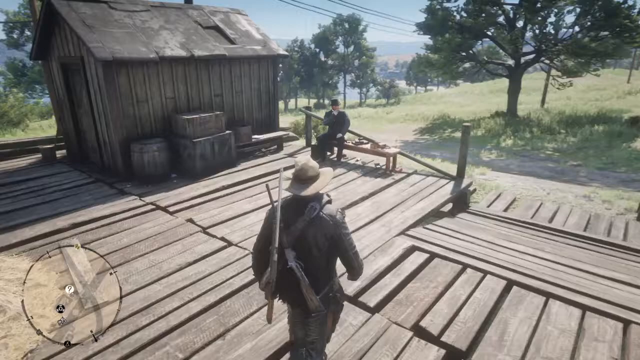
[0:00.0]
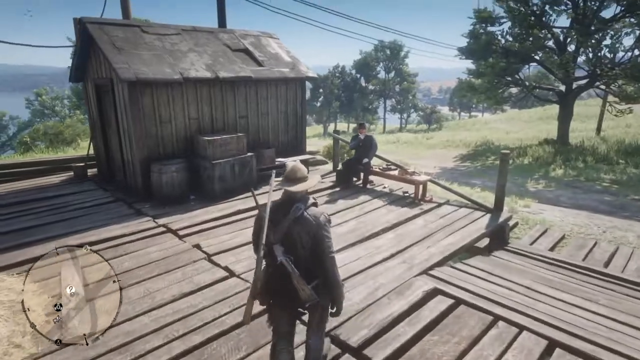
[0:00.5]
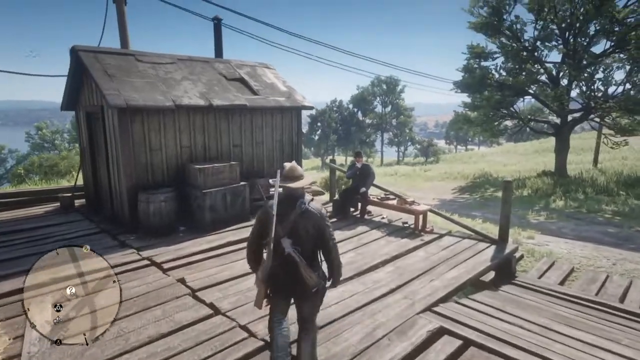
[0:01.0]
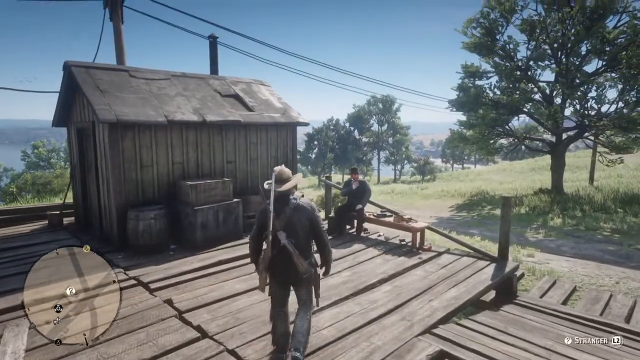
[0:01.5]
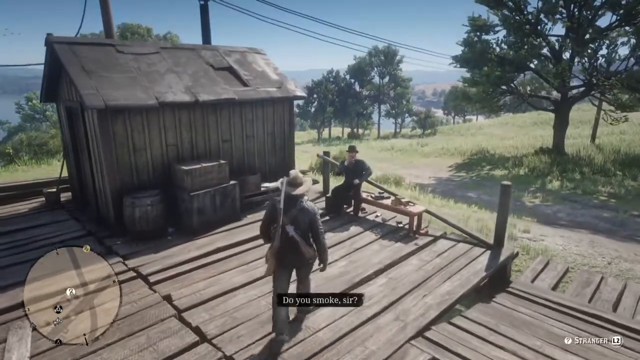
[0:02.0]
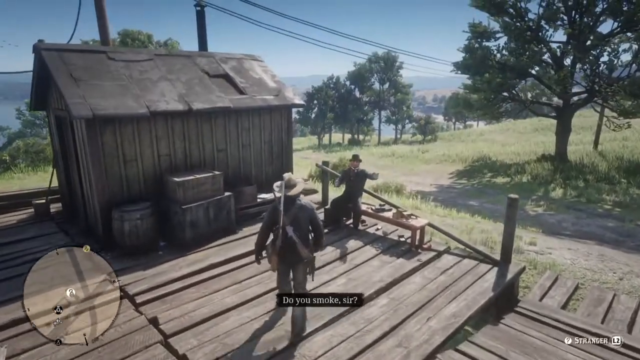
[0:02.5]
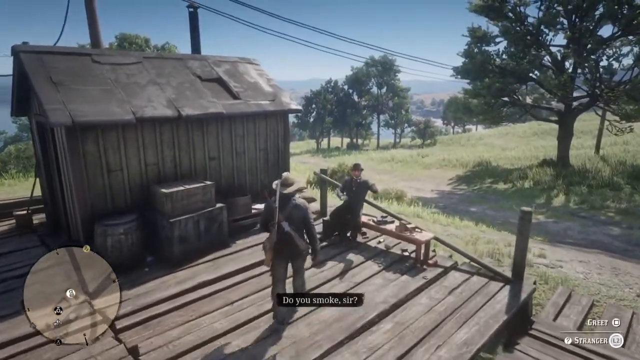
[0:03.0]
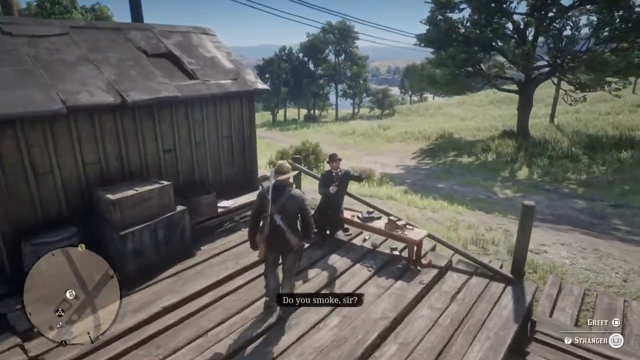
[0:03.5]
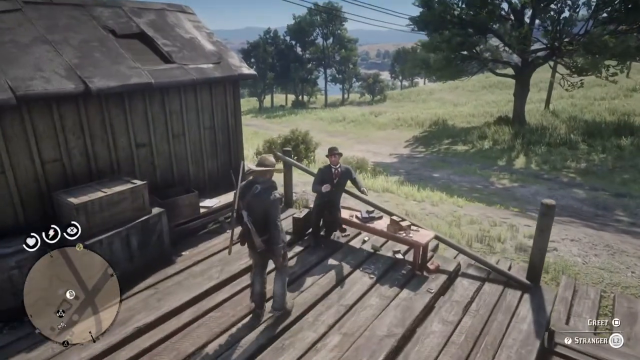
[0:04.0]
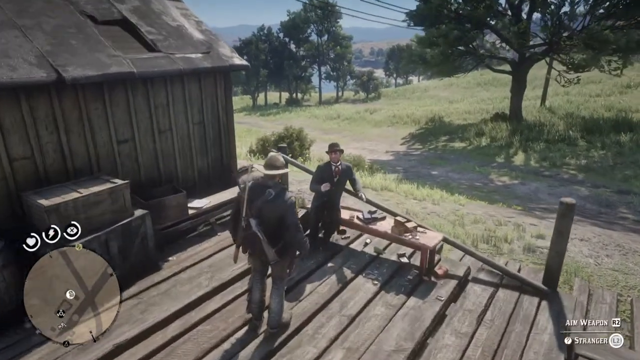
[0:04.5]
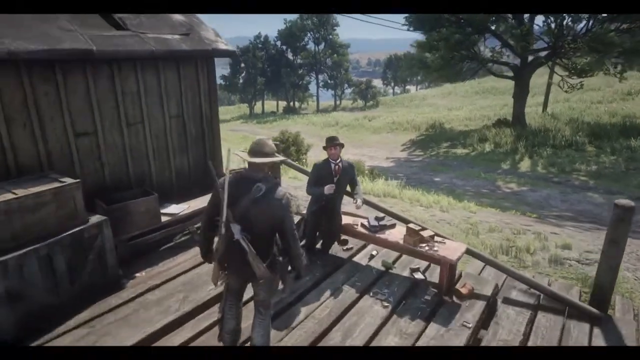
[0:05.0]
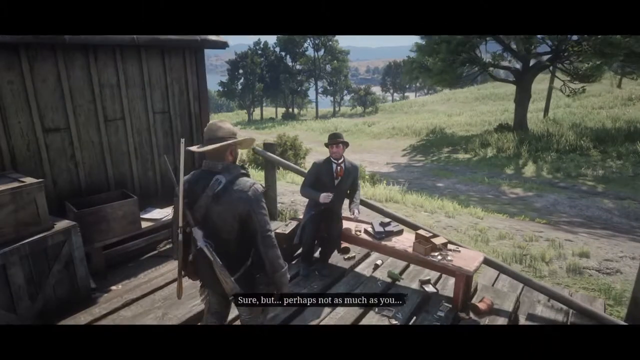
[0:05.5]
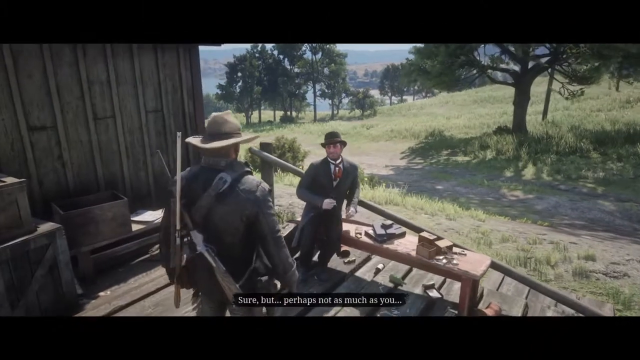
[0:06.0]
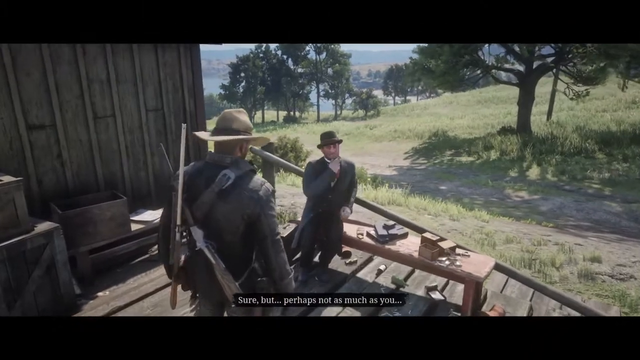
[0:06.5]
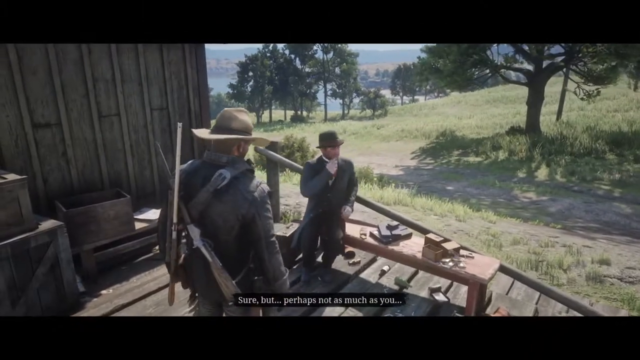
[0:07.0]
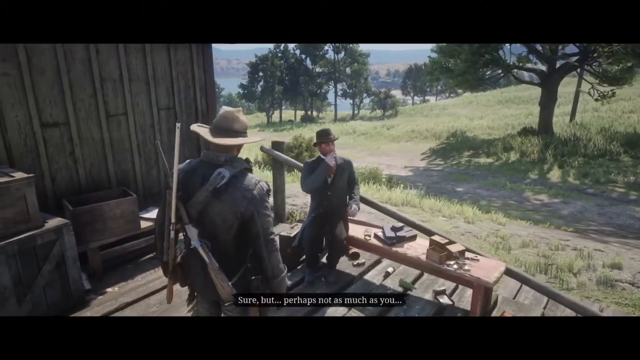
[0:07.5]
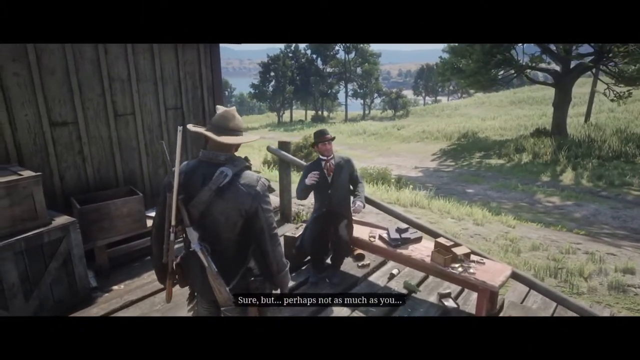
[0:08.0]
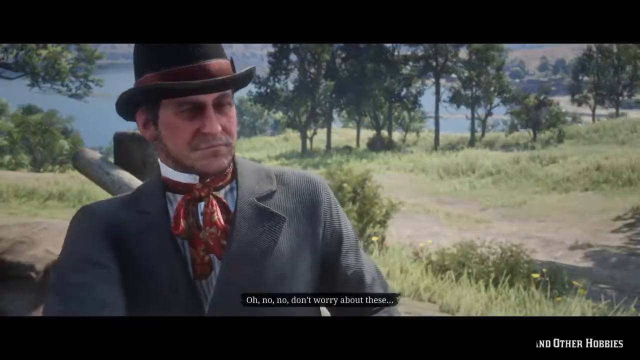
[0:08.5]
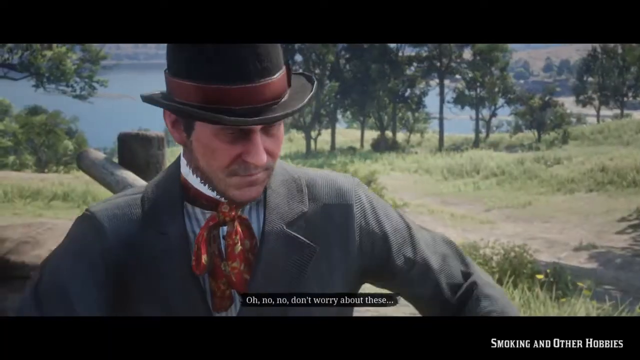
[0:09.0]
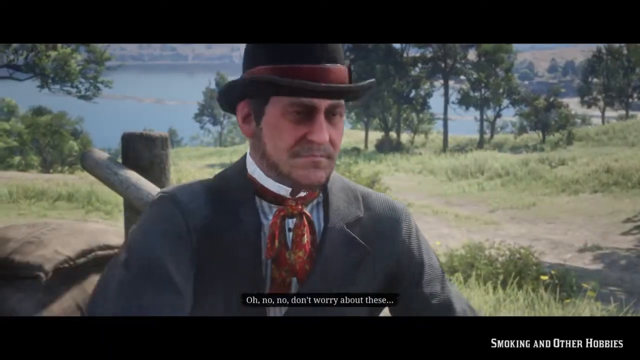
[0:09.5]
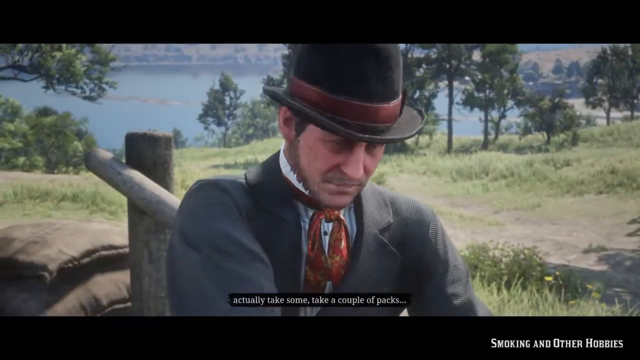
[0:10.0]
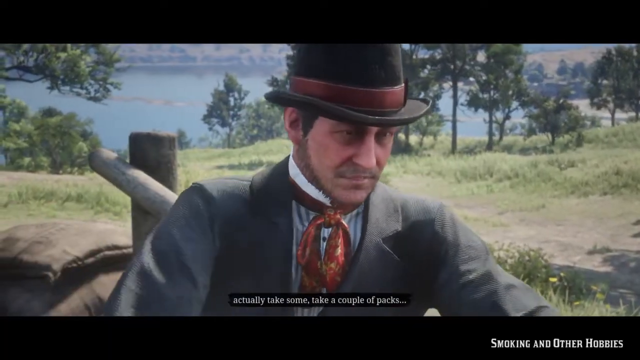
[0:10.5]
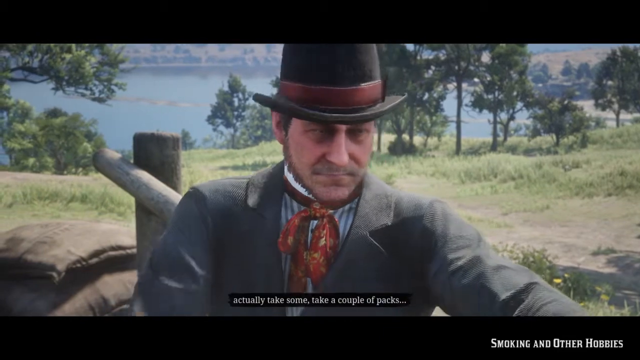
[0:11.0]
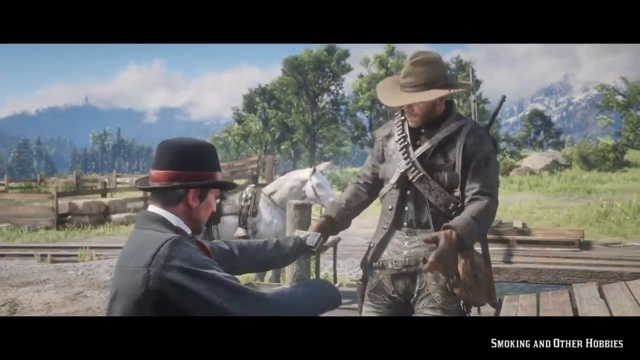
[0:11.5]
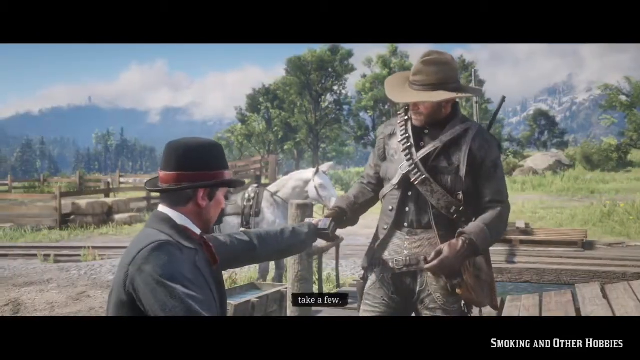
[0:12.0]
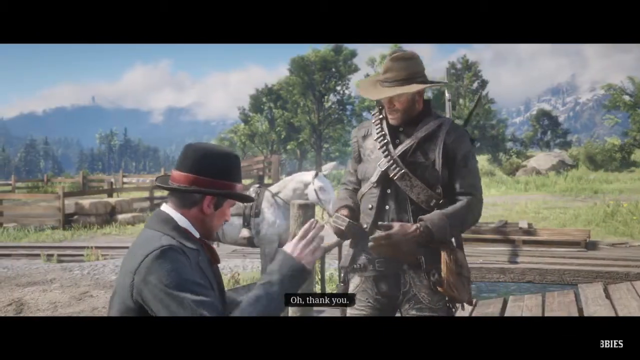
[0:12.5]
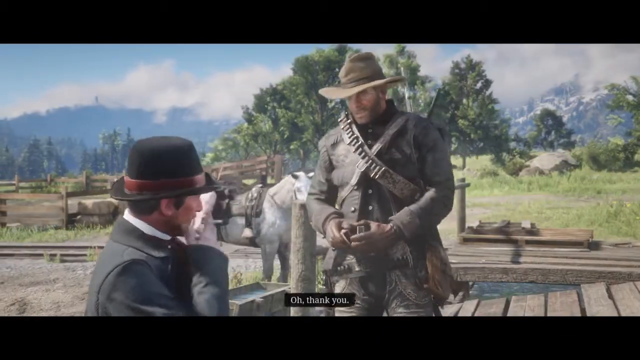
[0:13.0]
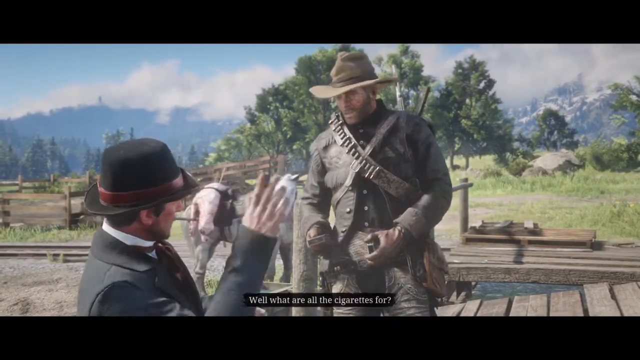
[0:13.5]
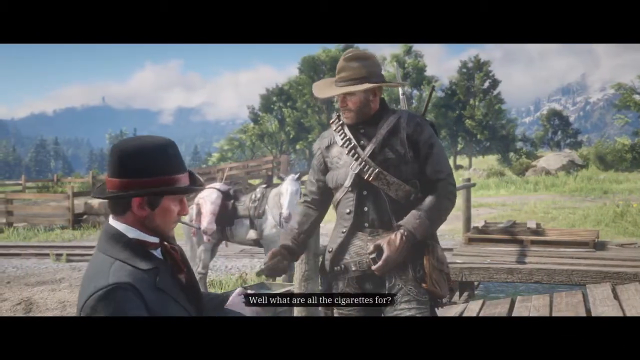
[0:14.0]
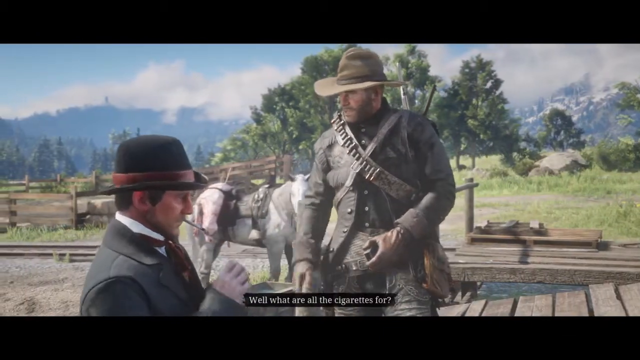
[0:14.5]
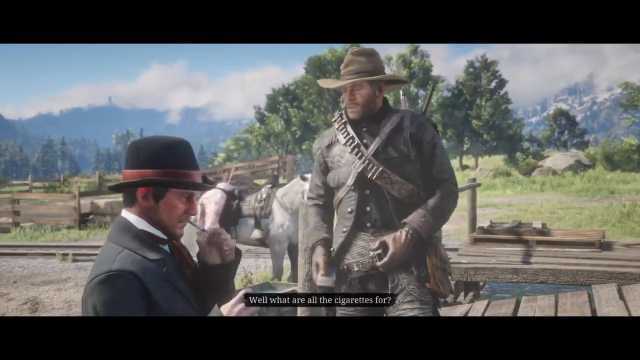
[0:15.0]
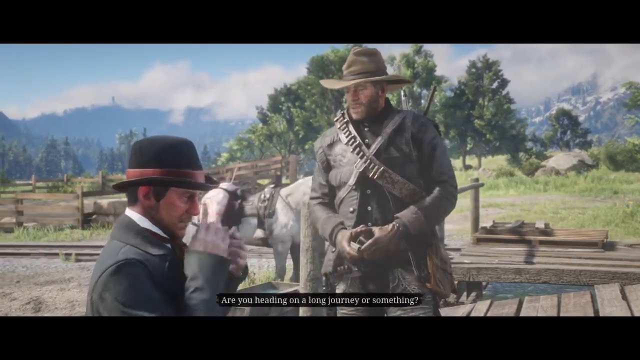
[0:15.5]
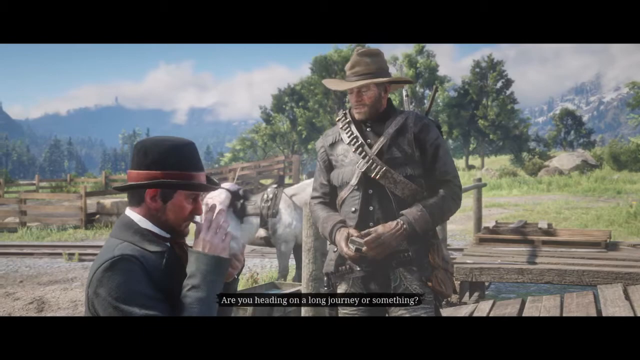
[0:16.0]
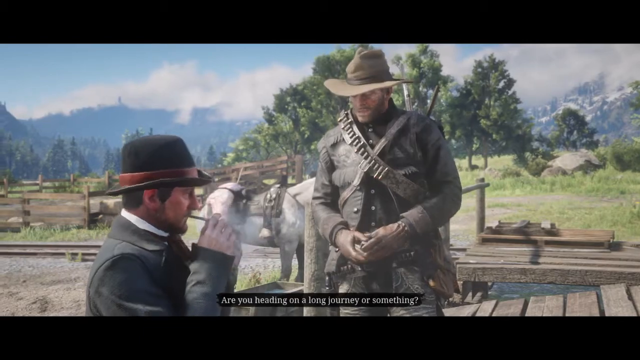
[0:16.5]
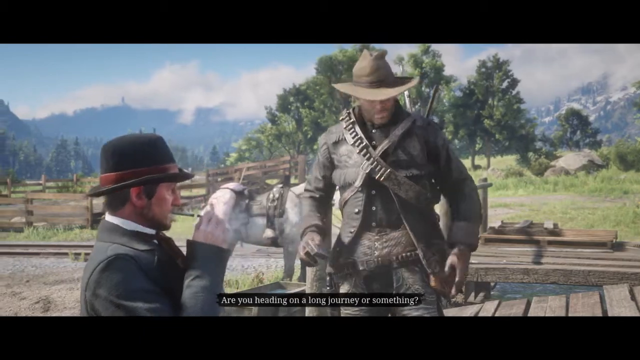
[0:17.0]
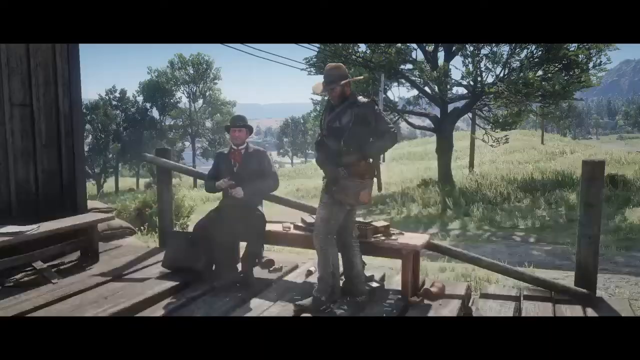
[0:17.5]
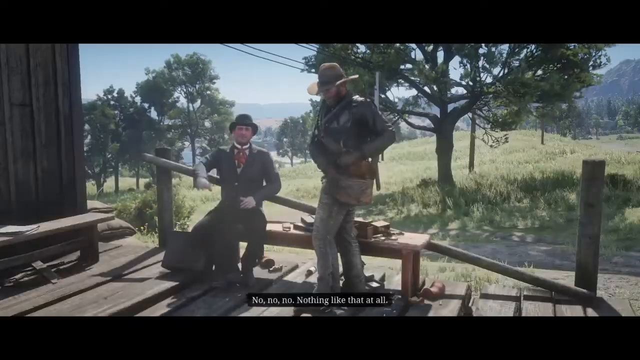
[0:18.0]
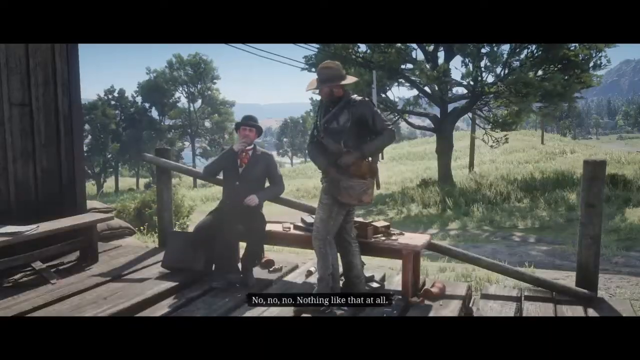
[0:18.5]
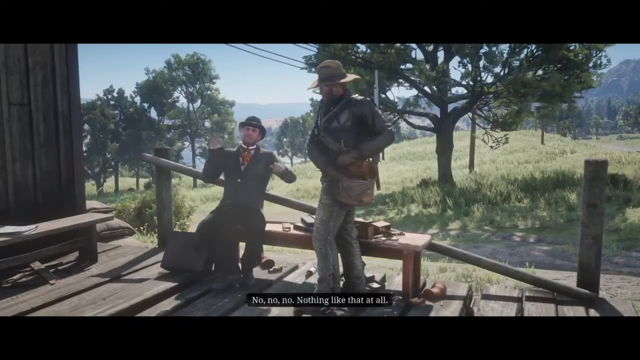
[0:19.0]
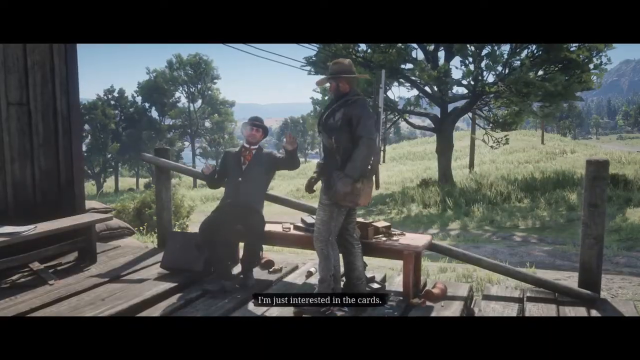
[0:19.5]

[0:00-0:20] The video shows gameplay from a video game. A wooden deck has a shed on it, and a man in a cowboy hat approaches a man sitting on a bench. A caption appears at the bottom of the screen that says "do you smoke sir?" The man on the bench responds, "sure, but perhaps not as much as you." In the bottom left of the screen there appears to be a circle showing the player, the surrounding map, and where the character is at that moment. The man on the bench says "take a couple packs" and hands the man in the cowboy hat some cigarettes. The two men are seen smoking.